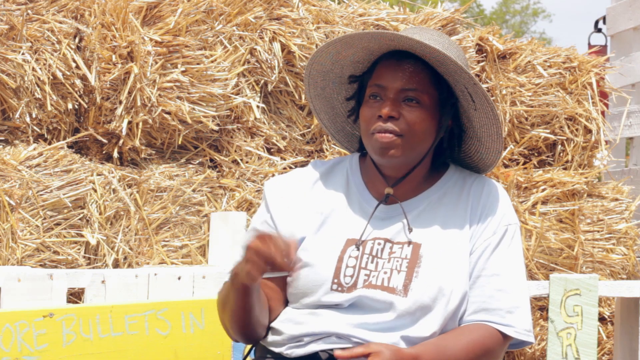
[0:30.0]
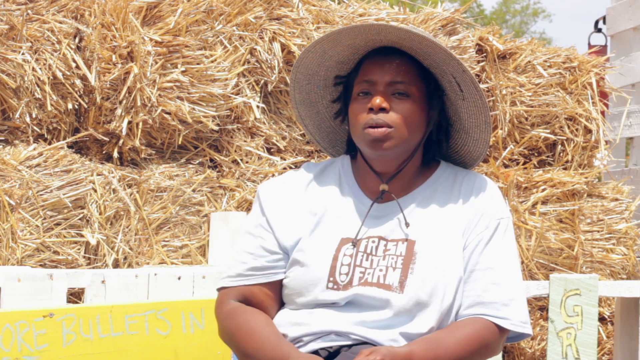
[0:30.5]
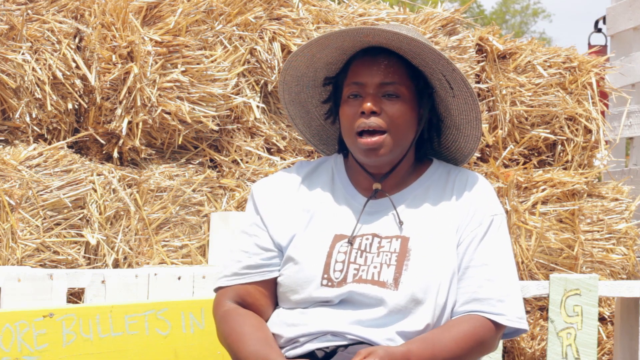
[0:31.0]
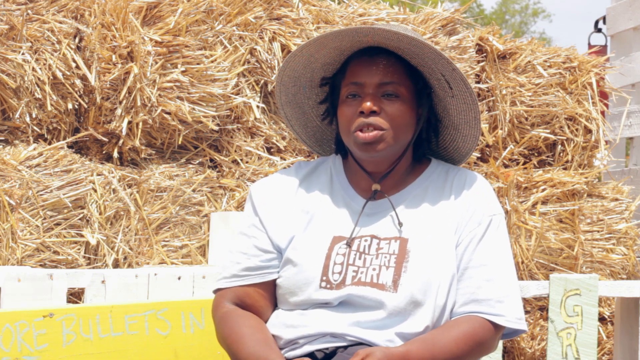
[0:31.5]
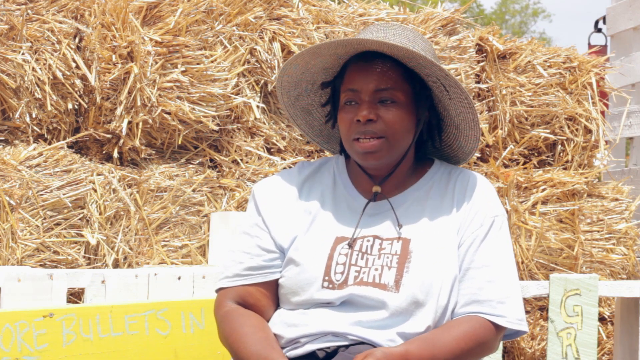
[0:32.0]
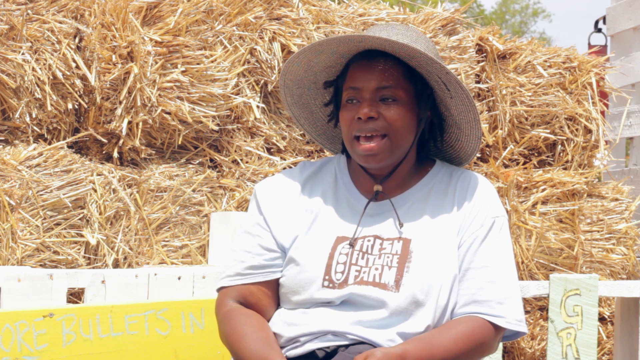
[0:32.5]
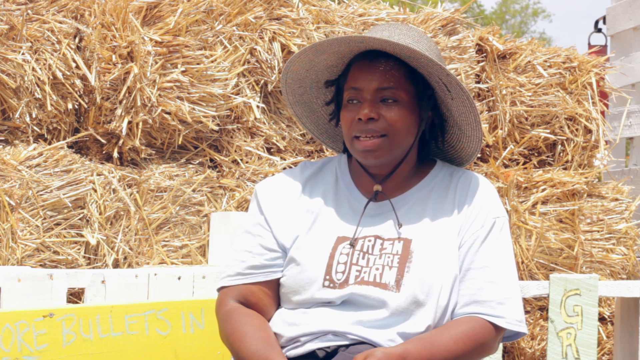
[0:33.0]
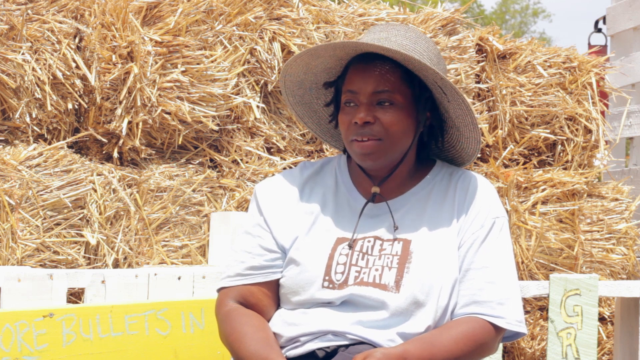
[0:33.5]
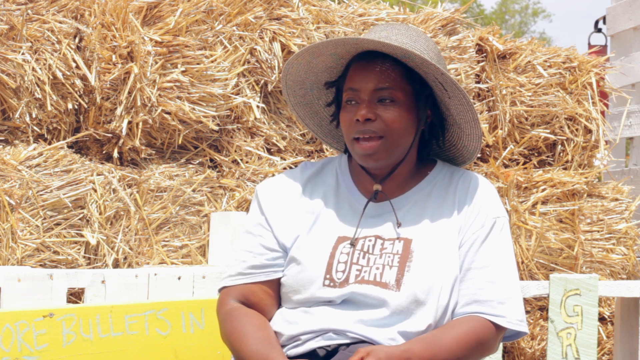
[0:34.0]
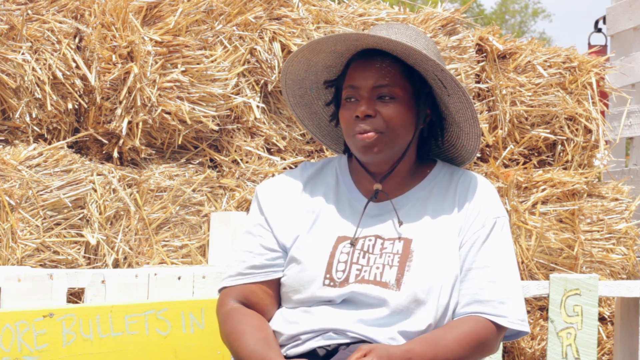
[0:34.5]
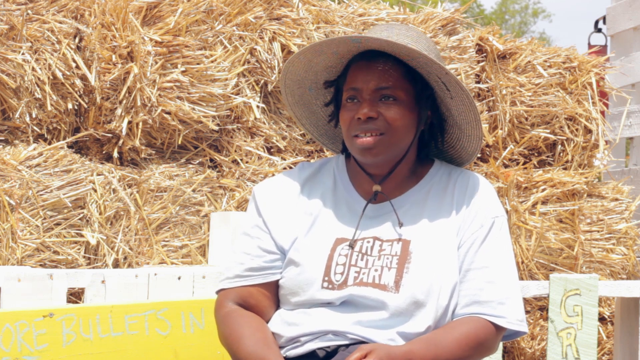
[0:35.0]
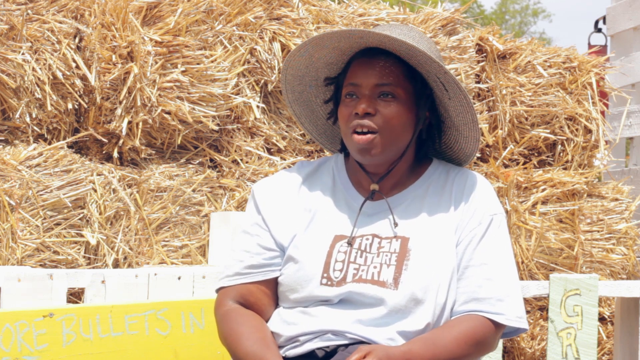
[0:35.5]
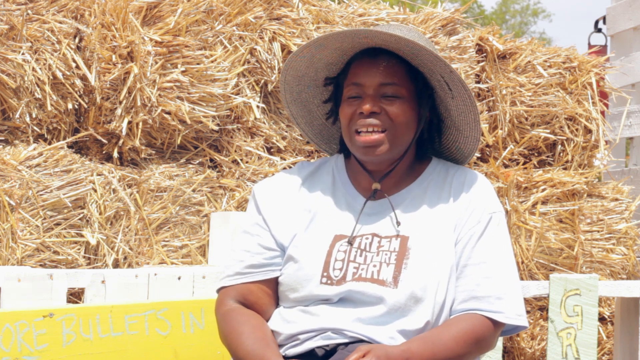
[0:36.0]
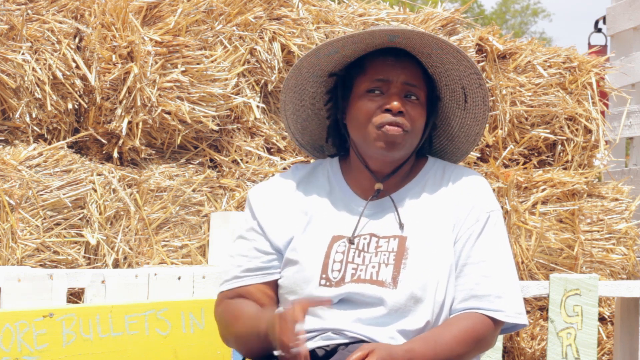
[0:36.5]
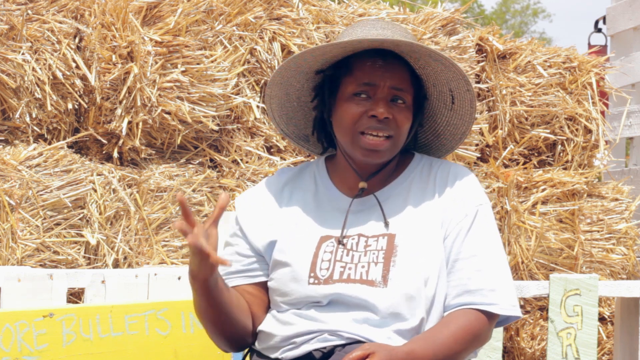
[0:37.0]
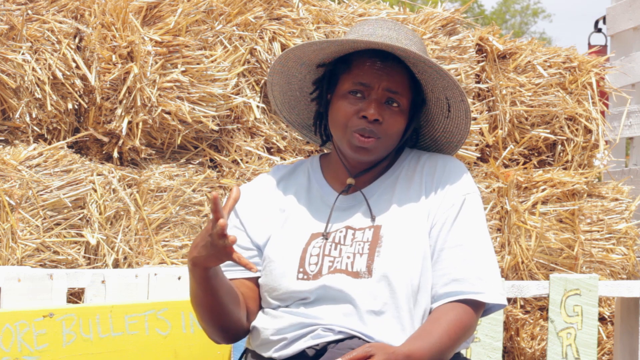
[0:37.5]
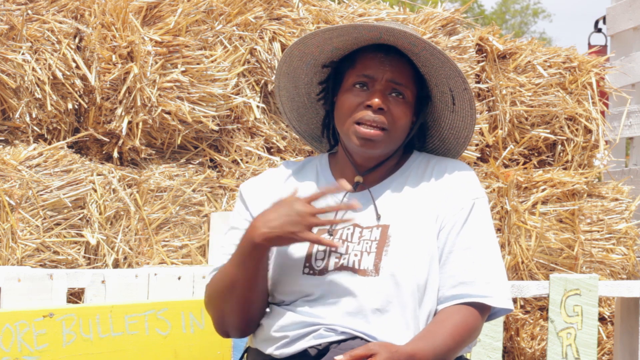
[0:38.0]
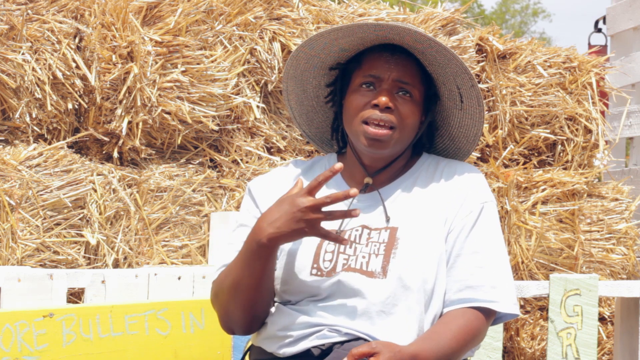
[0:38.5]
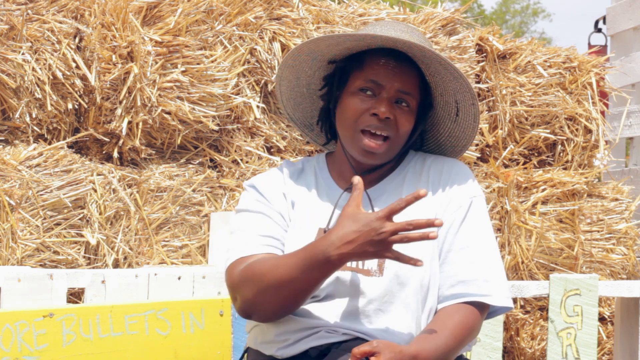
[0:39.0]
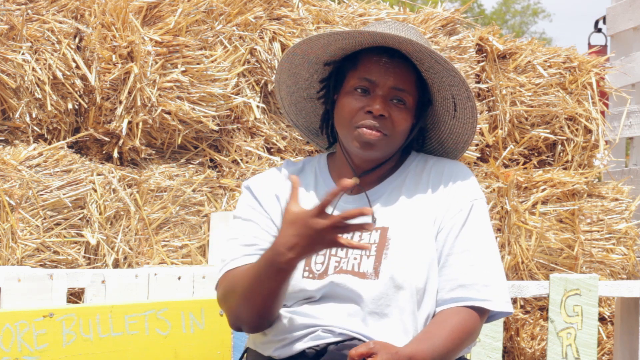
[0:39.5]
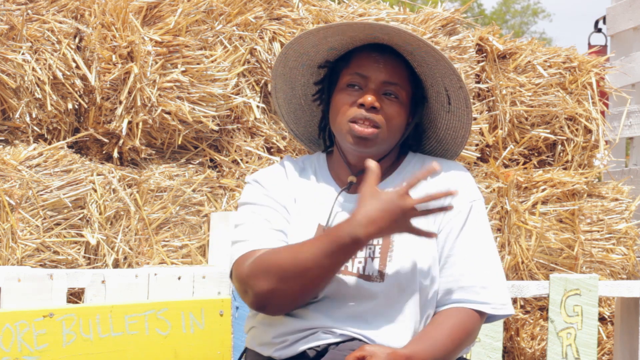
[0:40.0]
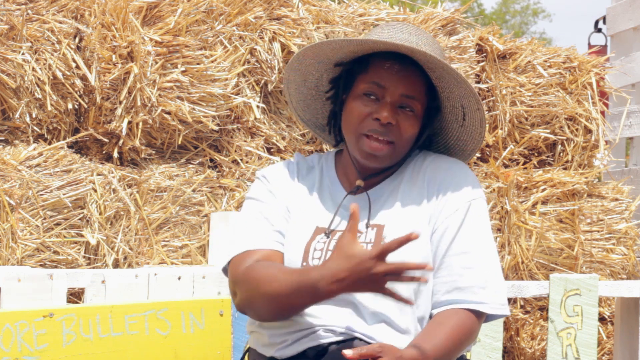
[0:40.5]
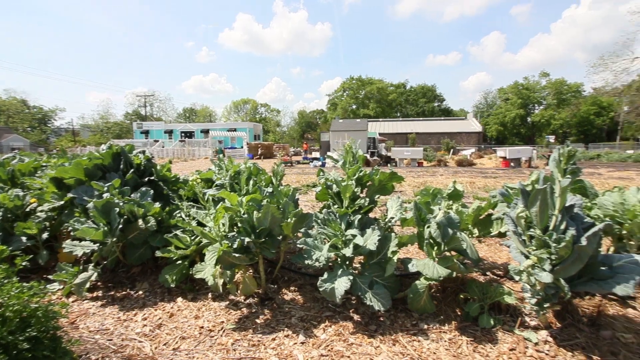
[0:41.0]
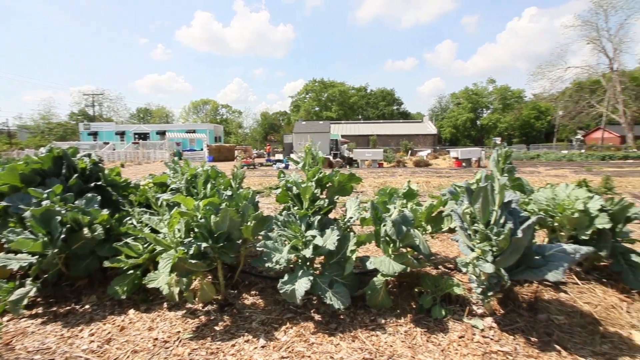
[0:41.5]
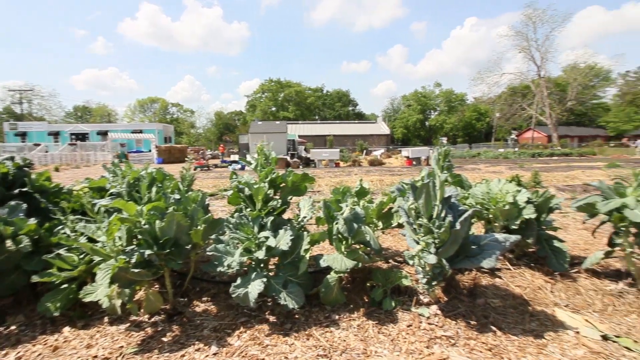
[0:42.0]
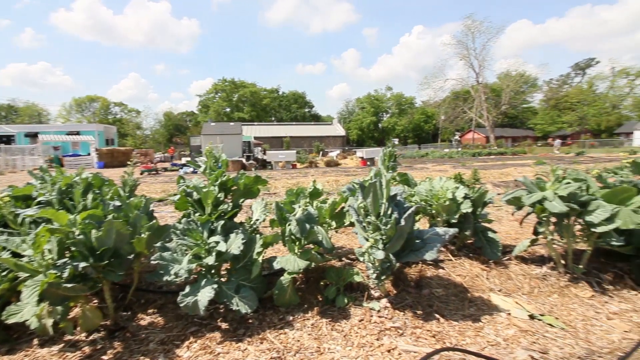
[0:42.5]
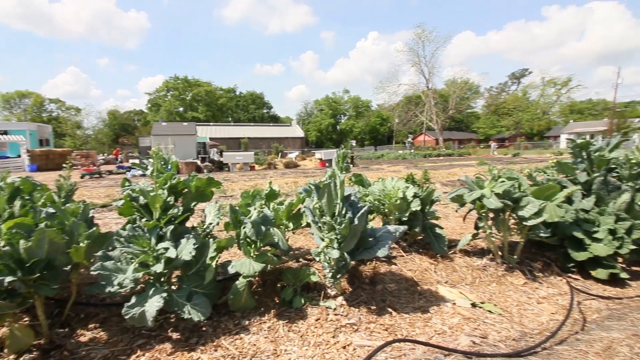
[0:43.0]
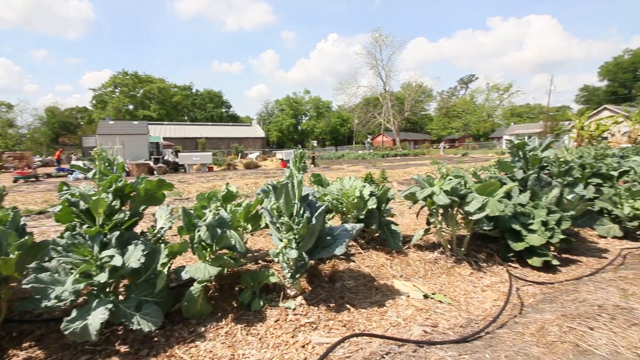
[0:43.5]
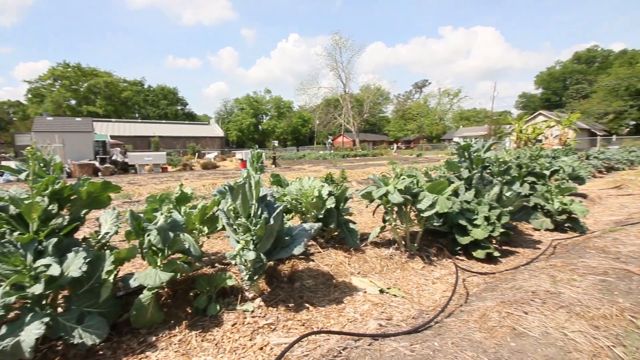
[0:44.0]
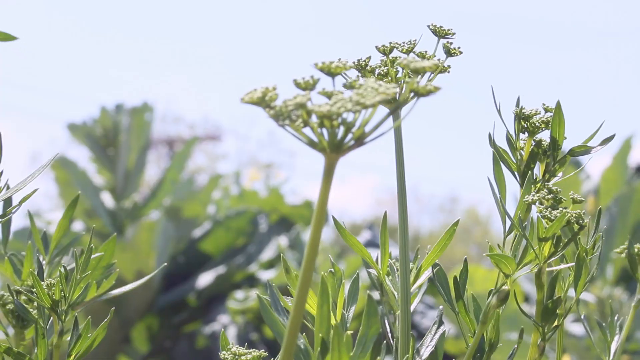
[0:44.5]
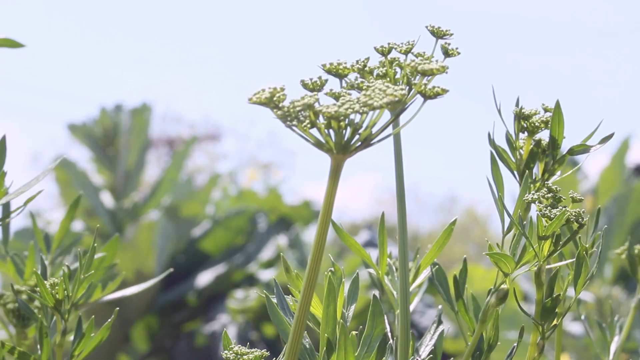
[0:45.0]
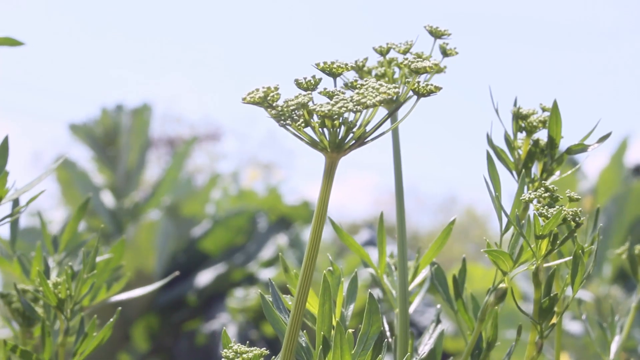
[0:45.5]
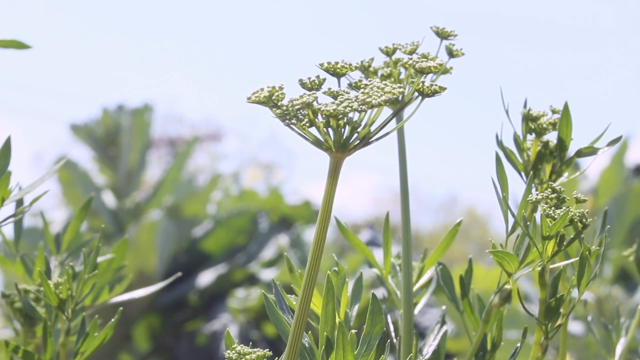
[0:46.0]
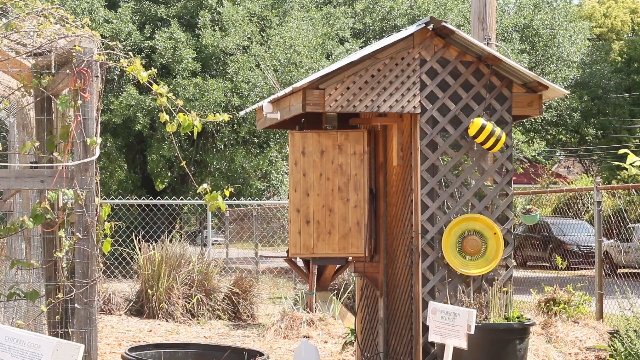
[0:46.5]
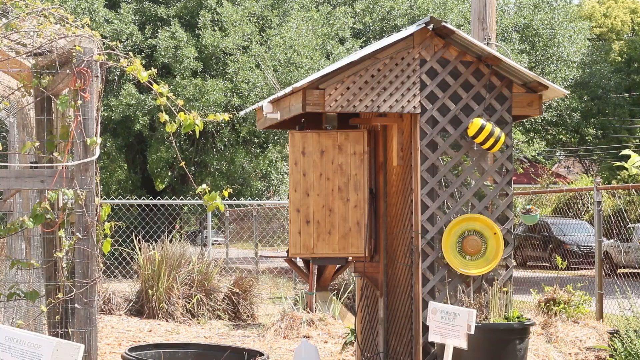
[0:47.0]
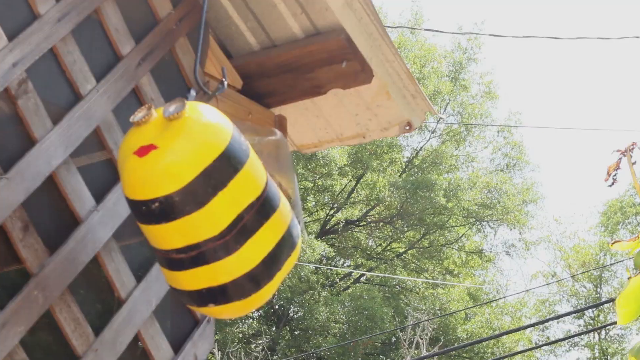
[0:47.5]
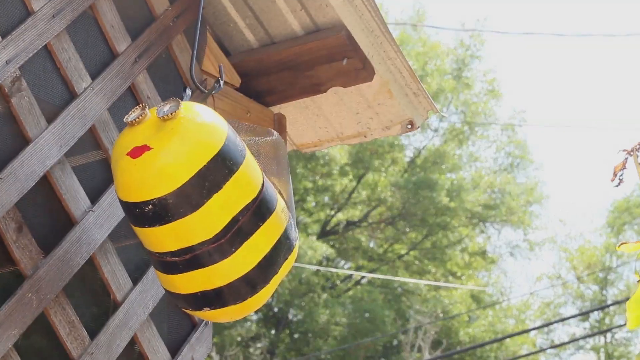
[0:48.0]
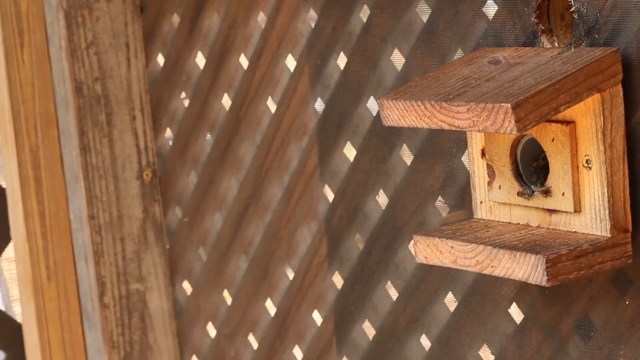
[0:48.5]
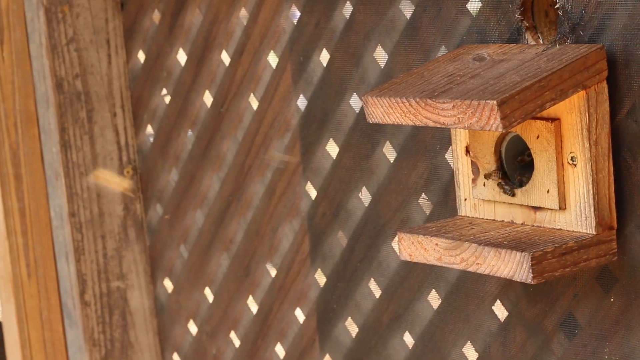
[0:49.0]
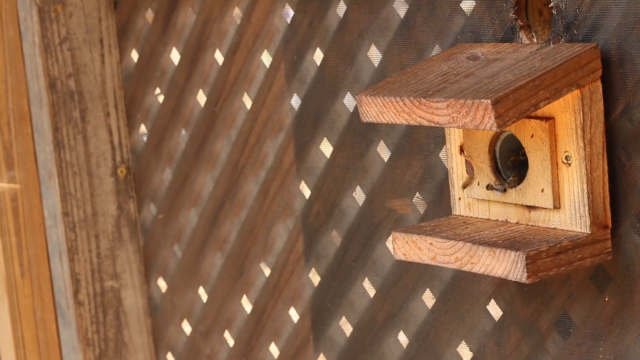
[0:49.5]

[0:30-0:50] The woman continues to appear in a straw hat and what seems to be a white shirt with her farm's name on it; she has short, curly black hair. The video moves around the farm, showing many different types of produce growing. Bees can be seen in the next part of the scene. The shots mainly show this woman in the straw hat and white shirt, talking. No other people appear besides her, except possibly an individual in the background of one of the transitions.